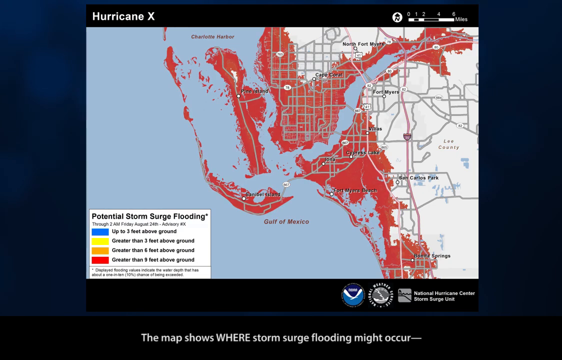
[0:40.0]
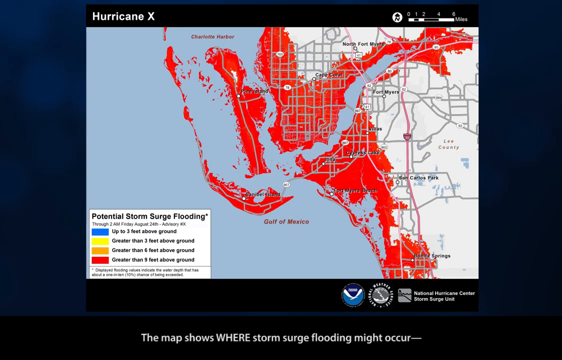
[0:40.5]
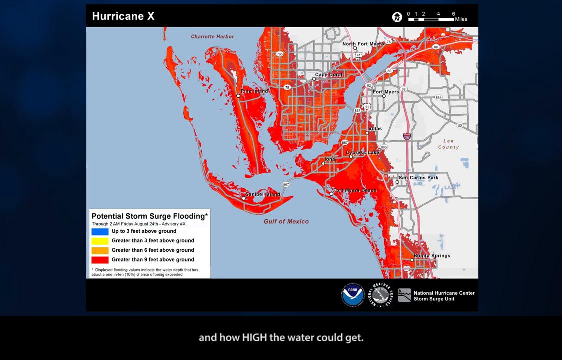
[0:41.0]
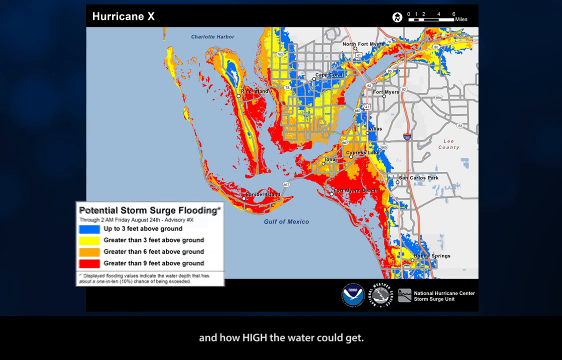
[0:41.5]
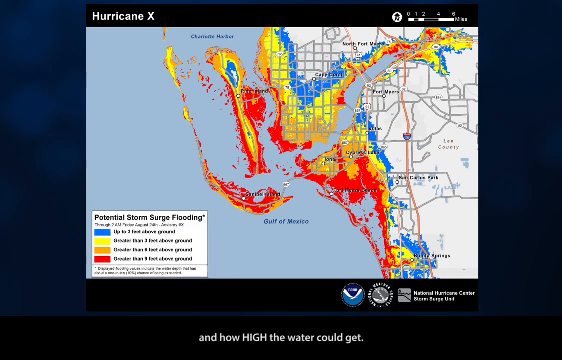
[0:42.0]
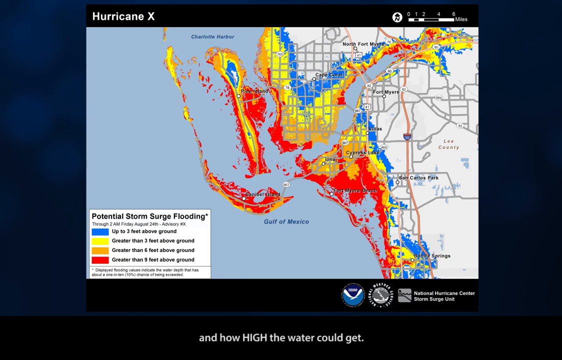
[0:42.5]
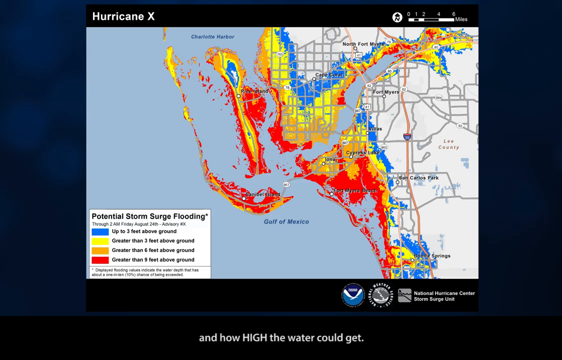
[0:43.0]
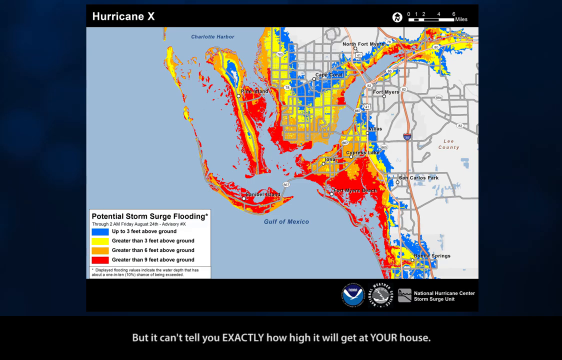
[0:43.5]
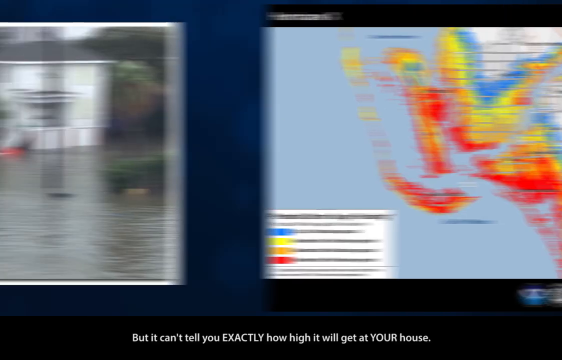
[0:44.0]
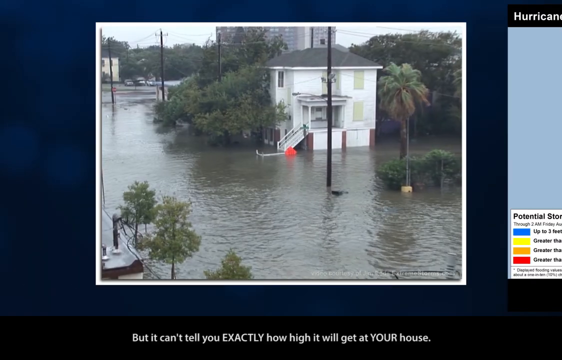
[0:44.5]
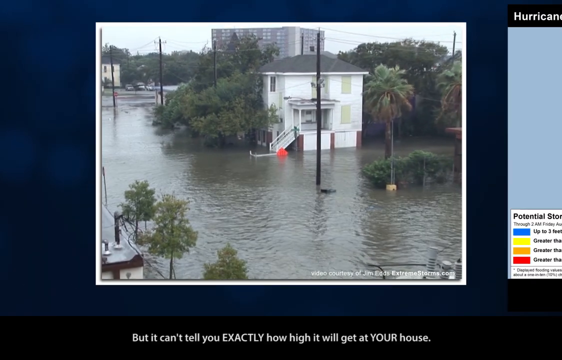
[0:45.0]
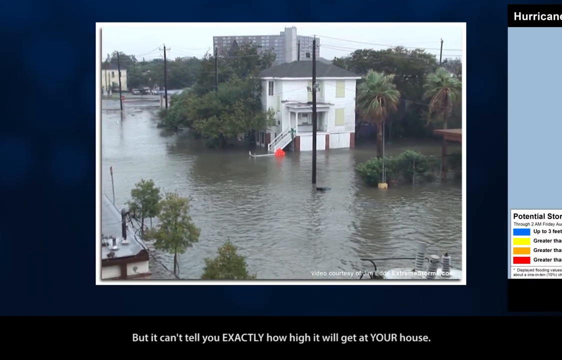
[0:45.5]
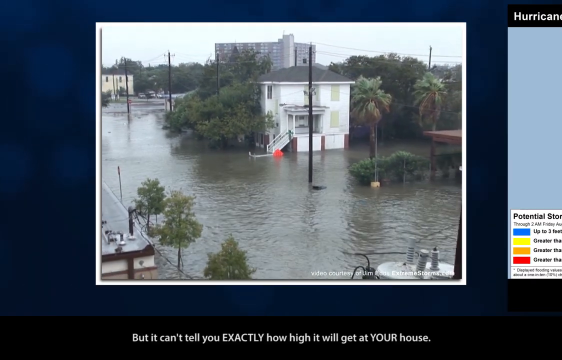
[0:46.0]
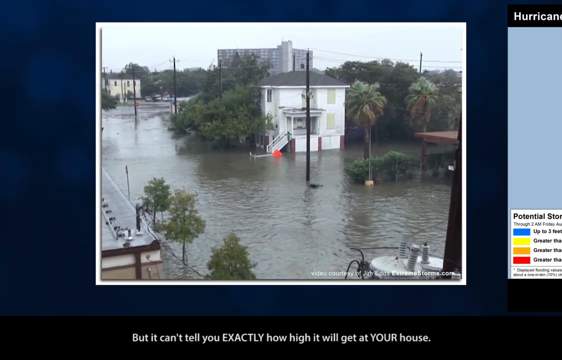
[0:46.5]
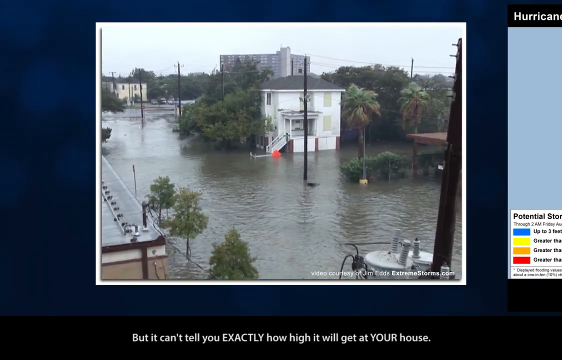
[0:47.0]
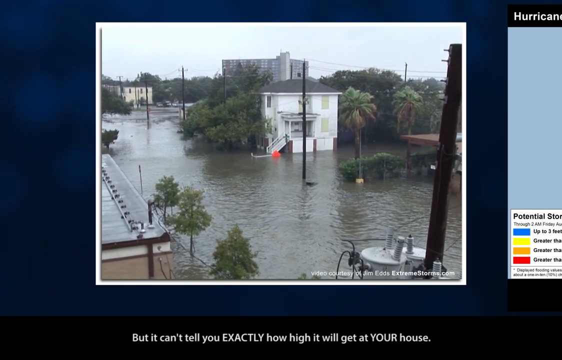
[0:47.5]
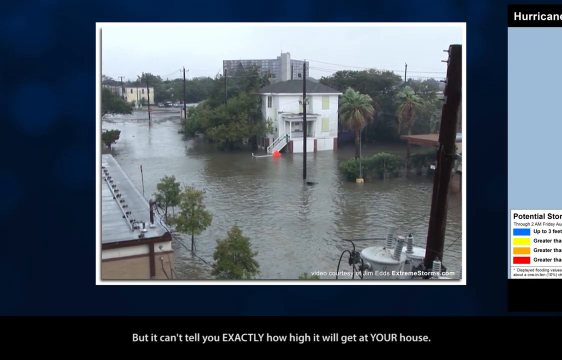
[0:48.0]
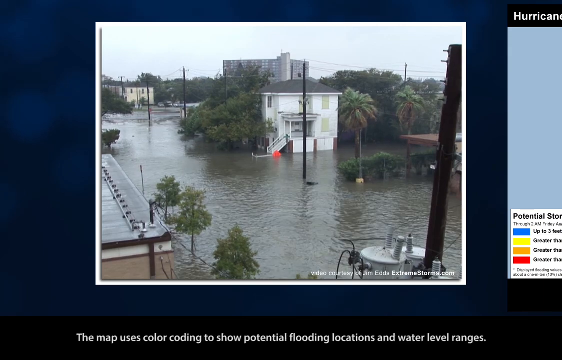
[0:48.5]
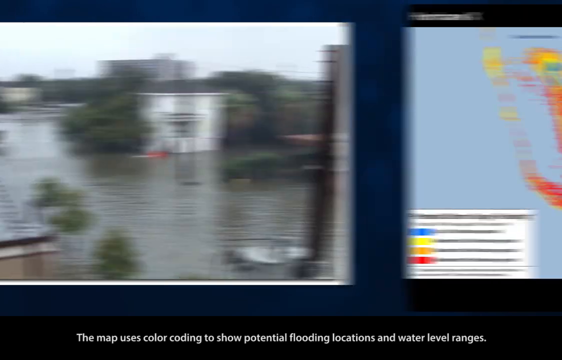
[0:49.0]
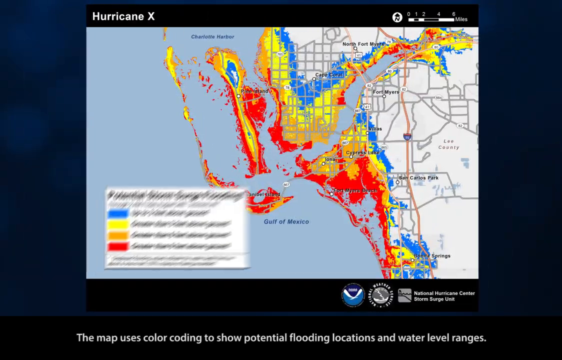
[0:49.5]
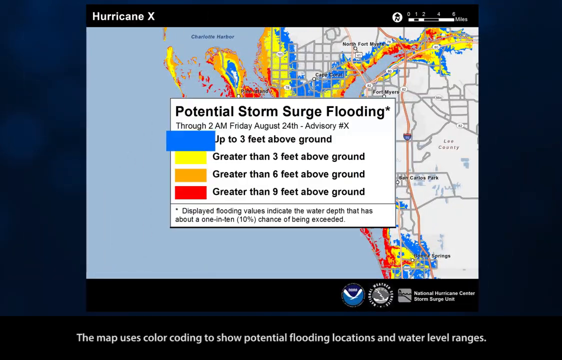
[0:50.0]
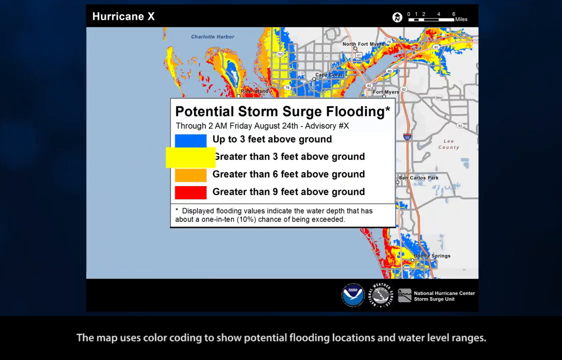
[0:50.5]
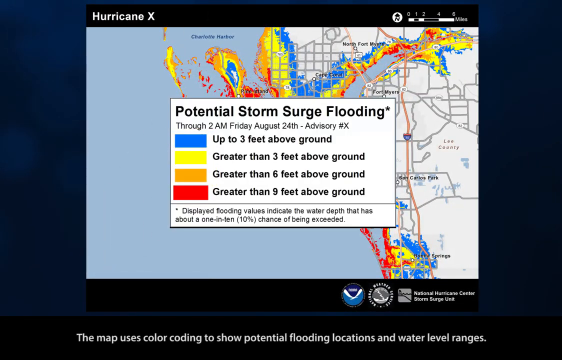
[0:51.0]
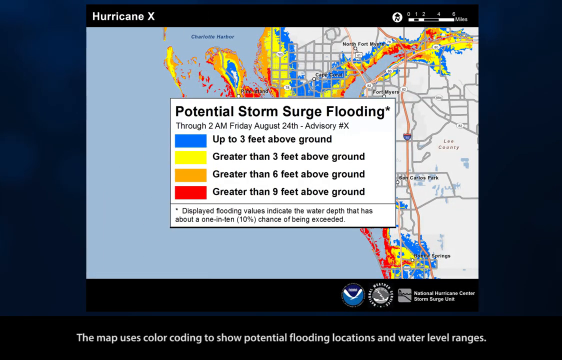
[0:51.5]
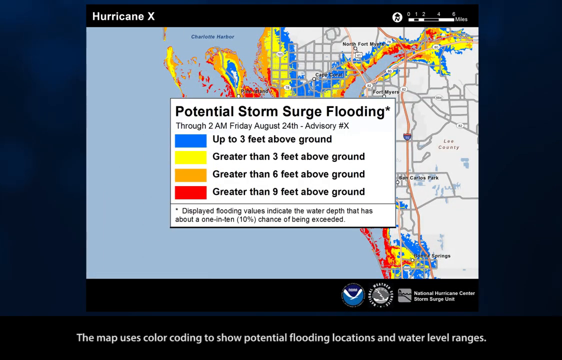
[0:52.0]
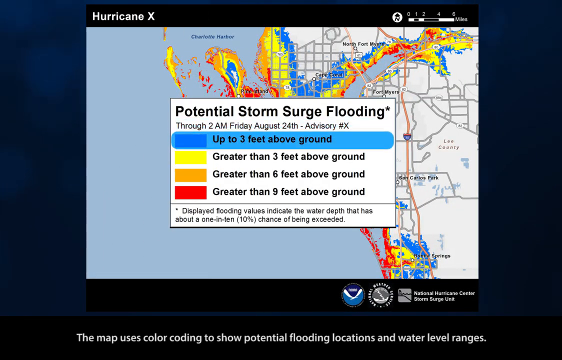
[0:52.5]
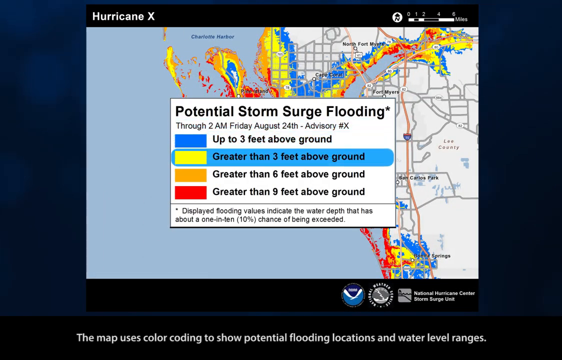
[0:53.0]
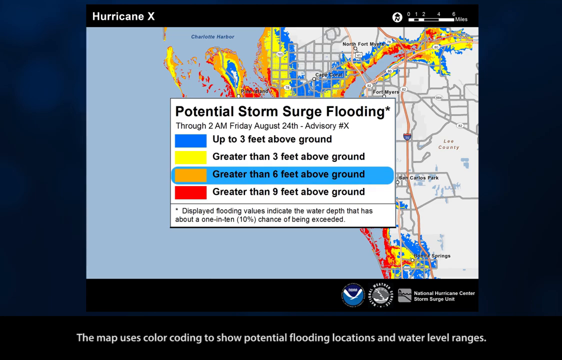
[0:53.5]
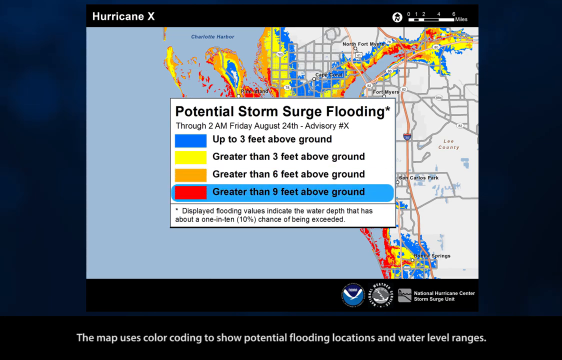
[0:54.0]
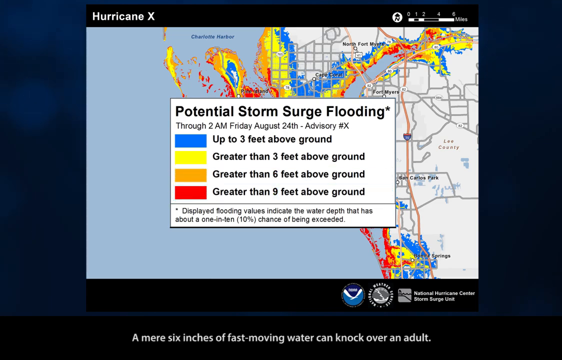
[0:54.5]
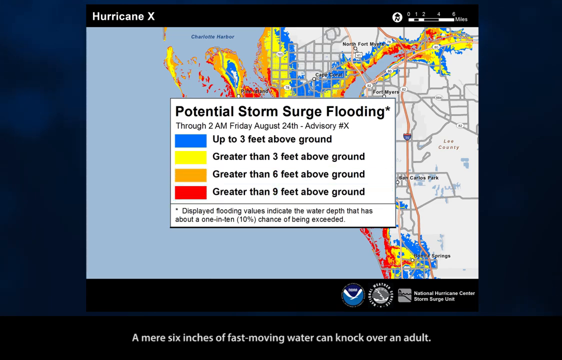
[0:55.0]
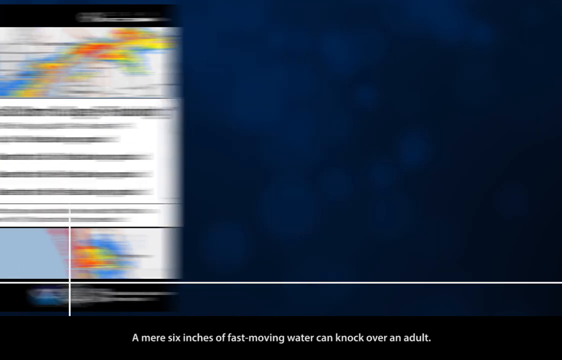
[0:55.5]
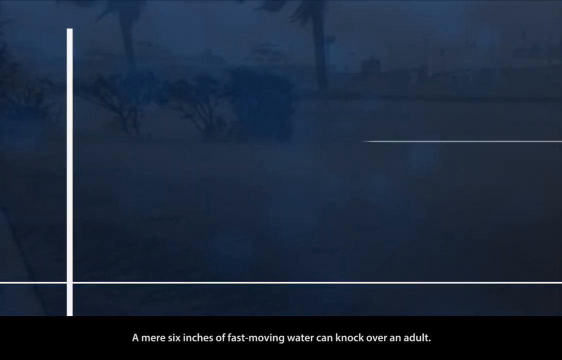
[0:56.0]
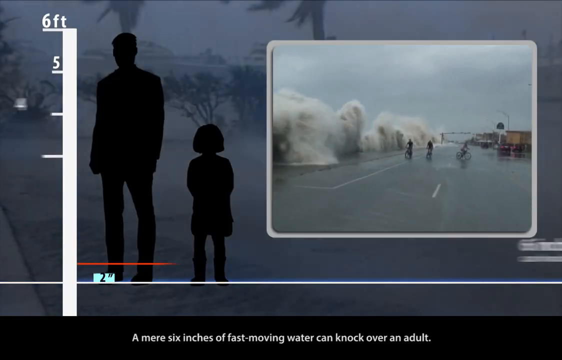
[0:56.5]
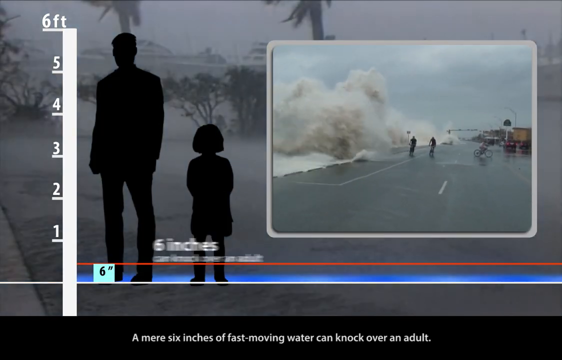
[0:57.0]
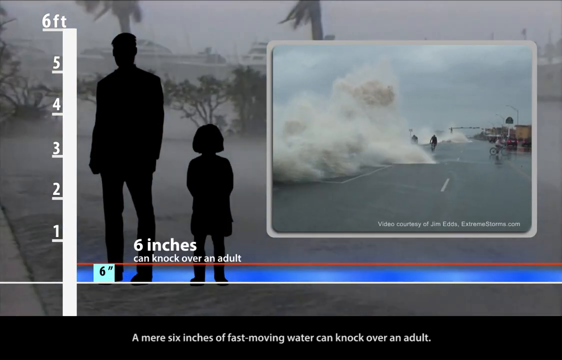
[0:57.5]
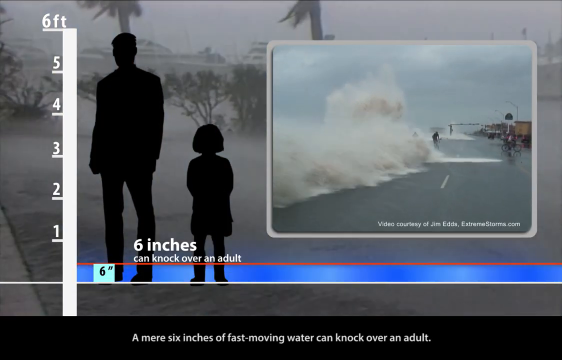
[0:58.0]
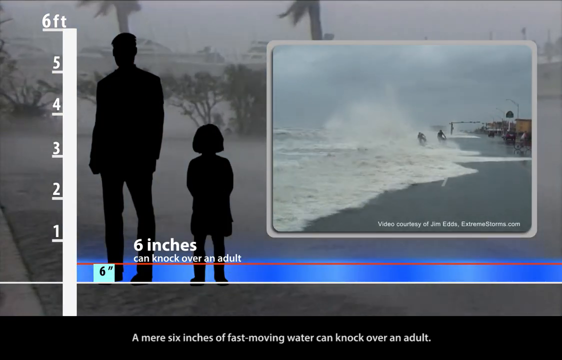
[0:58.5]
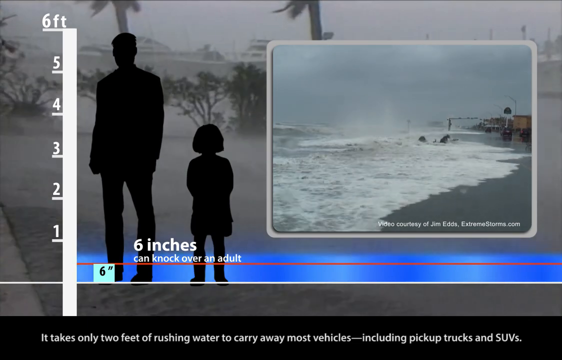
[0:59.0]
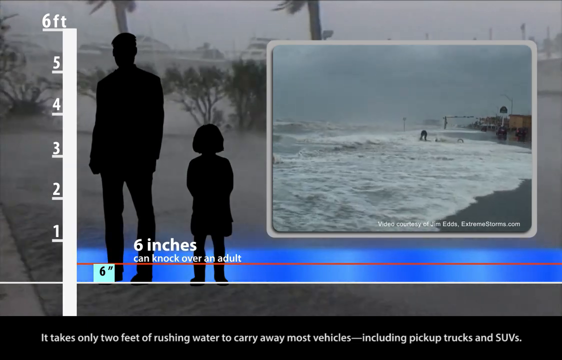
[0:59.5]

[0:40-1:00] A map has blue, areas highlighted in red, and the rest in white. According to the legend, the red areas are greater than nine feet above ground for potential storm surge, and they flash red. Other, smaller areas flash yellow (greater than three feet) and blue (up to three feet); the main area is red. A house with trees around it has flooding all the way up to the porch. A close-up of the potential storm surge flooding map reads "through 2 a.m. Friday, August 24th, advisory number X," with the four colors again, and text saying "displayed flooding values indicate the water depth that has about a 1 in 10 chance of being exceeded." Outlines of a man and a child follow: the man marks six feet and the child three feet, with text saying "six inches can knock over an adult." People riding bikes are knocked to the ground by the storm surge. The map with red returns, the red becomes bright, and then the yellow and blue come in. The flooded areas are then gone through one by one with the storm surge flooding height for each. People riding bikes in the storm area wipe out as the surge knocks them down.